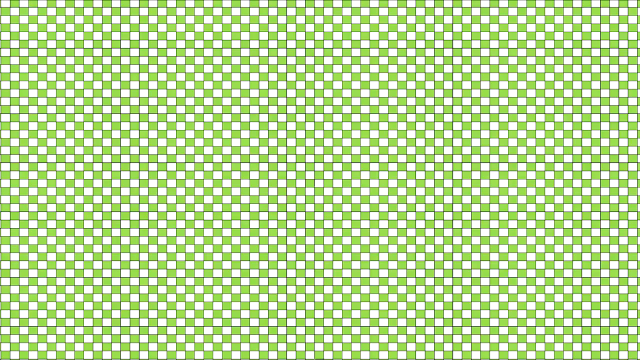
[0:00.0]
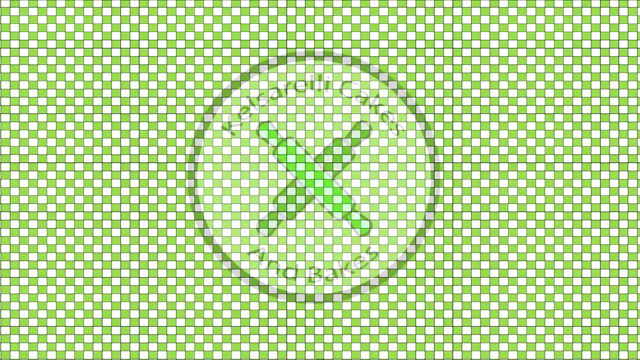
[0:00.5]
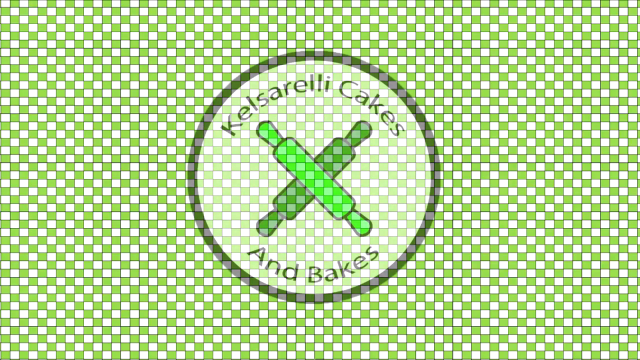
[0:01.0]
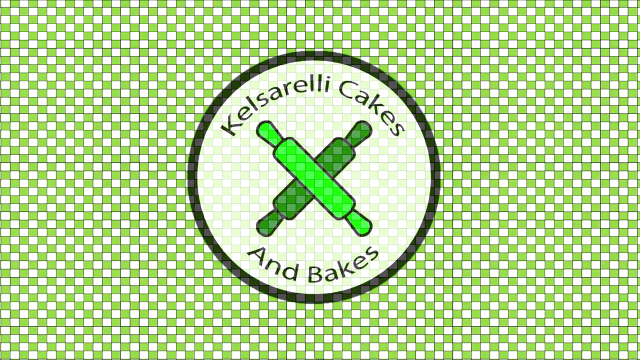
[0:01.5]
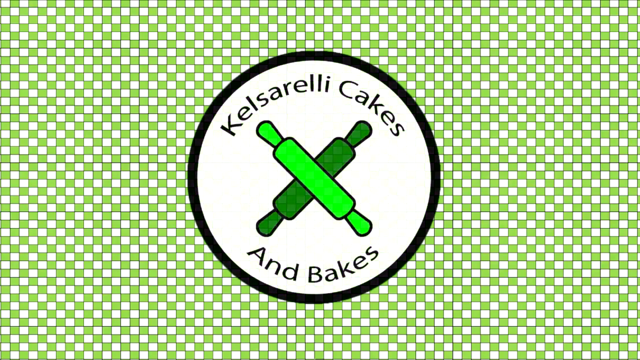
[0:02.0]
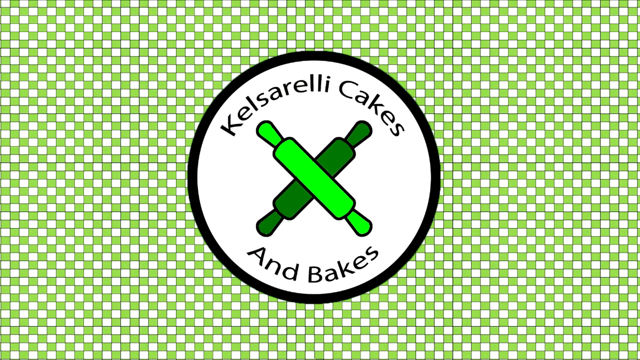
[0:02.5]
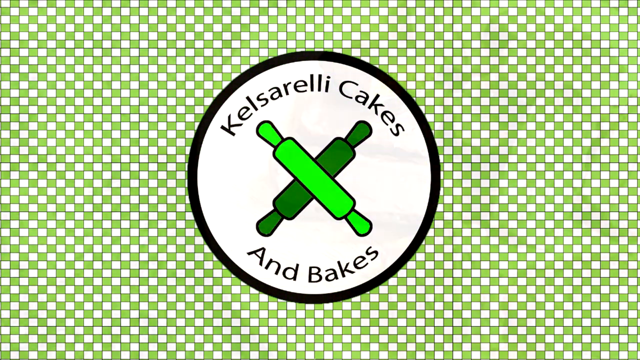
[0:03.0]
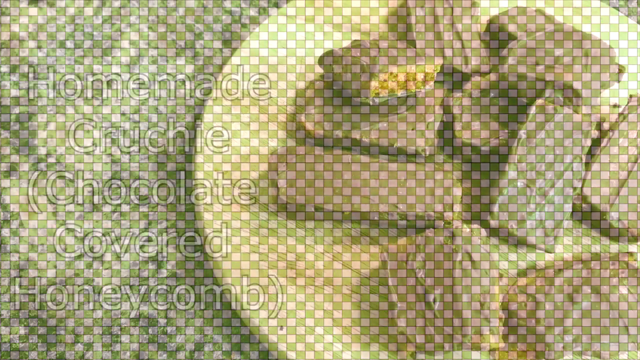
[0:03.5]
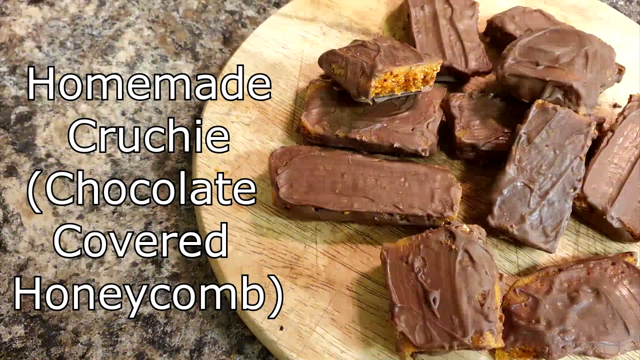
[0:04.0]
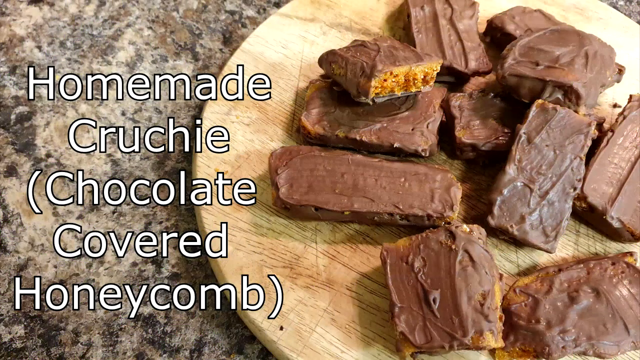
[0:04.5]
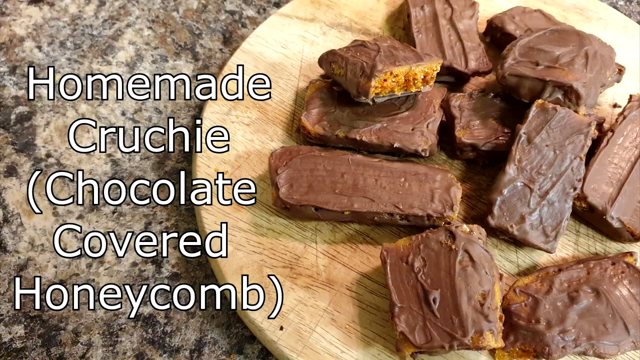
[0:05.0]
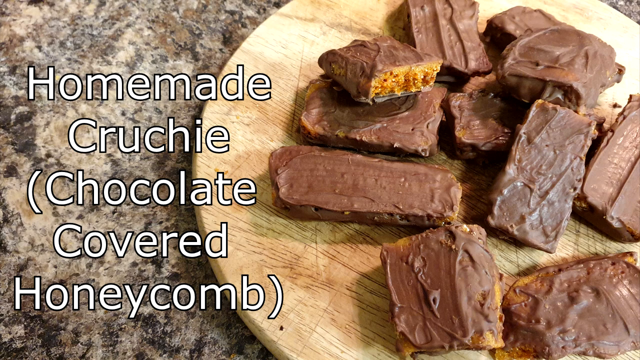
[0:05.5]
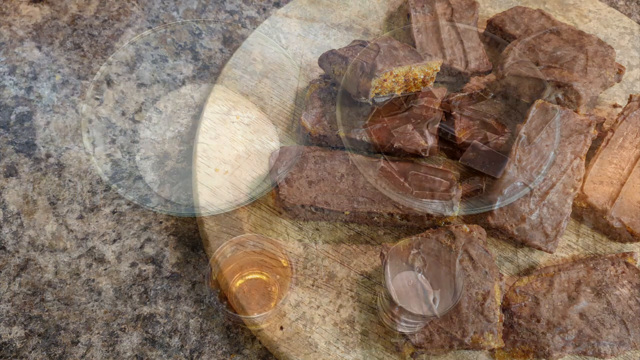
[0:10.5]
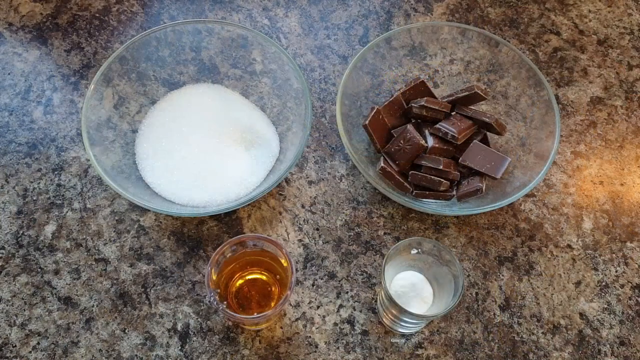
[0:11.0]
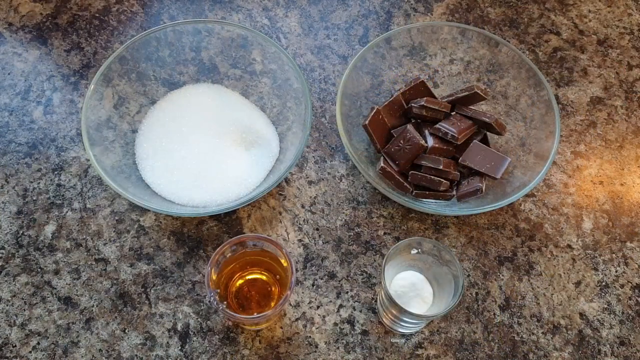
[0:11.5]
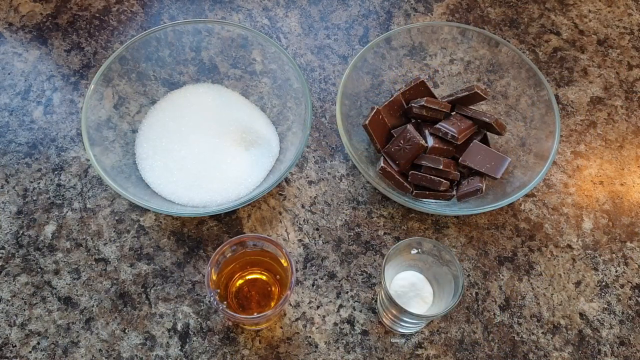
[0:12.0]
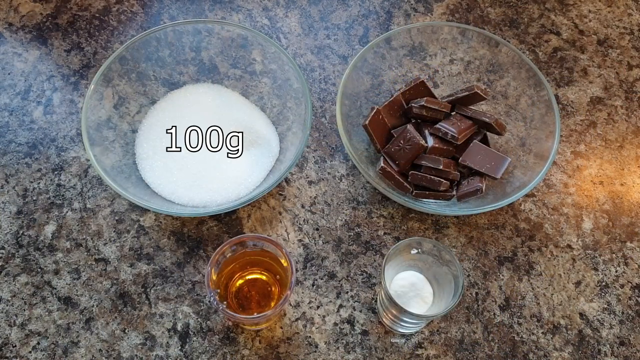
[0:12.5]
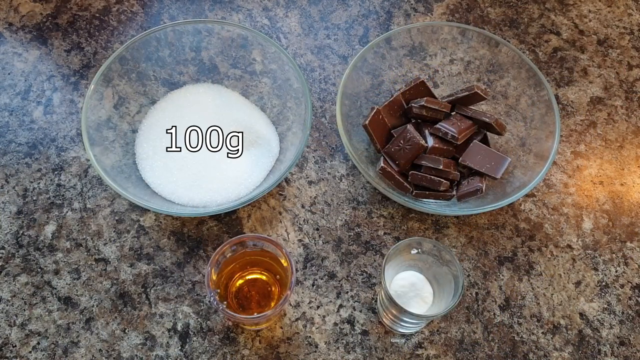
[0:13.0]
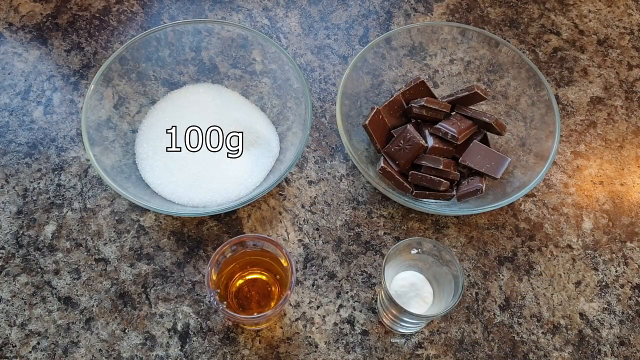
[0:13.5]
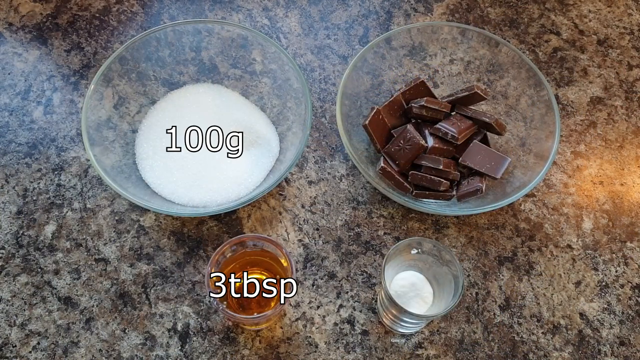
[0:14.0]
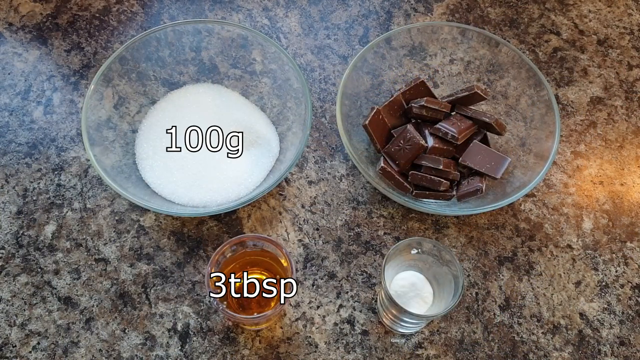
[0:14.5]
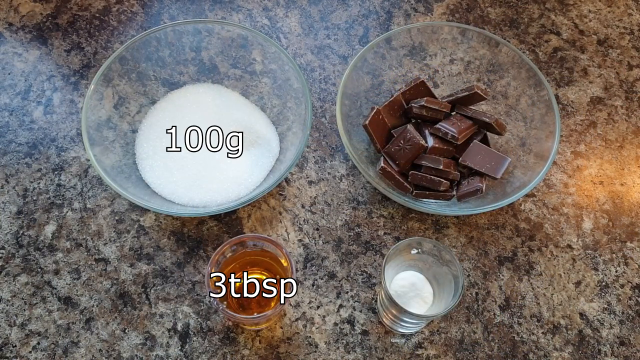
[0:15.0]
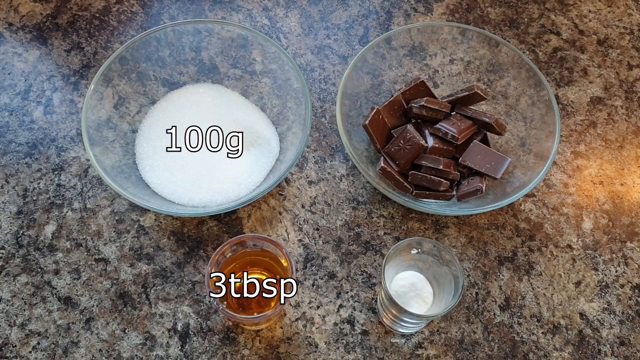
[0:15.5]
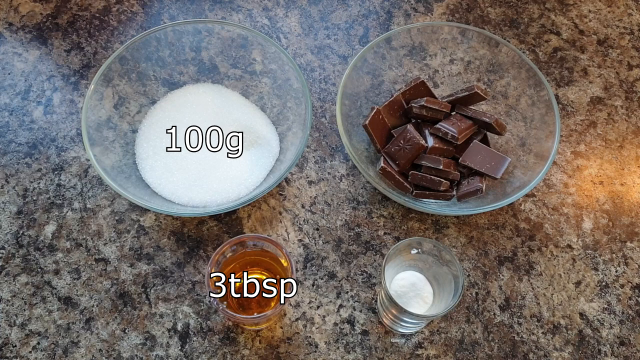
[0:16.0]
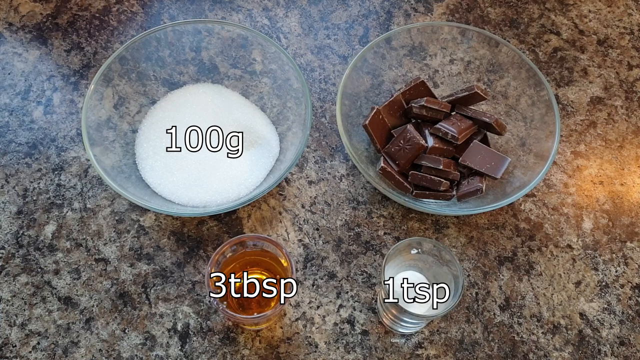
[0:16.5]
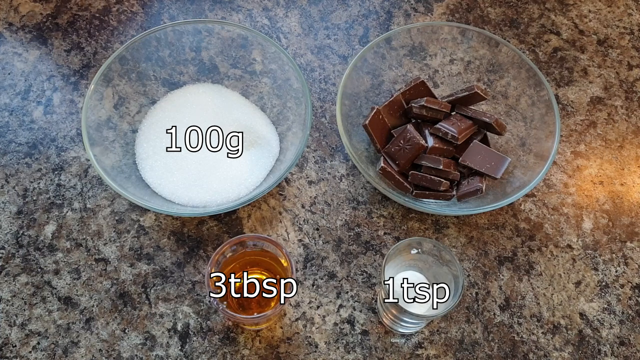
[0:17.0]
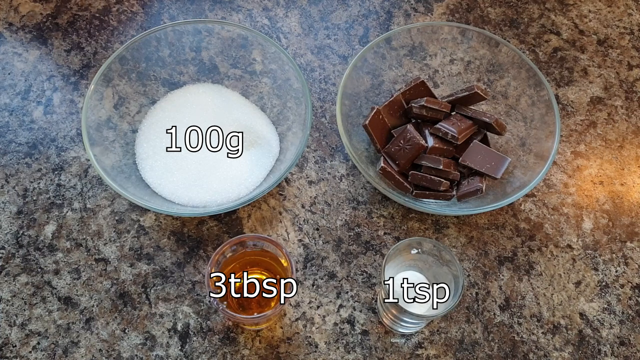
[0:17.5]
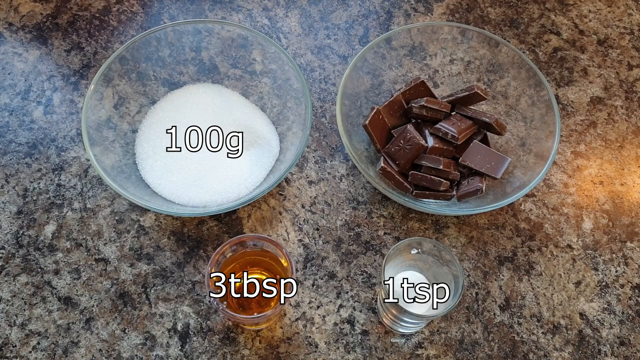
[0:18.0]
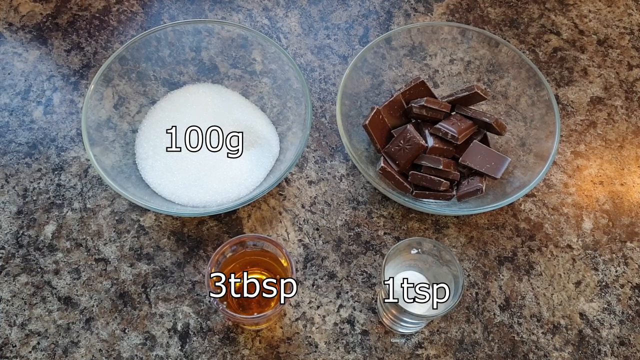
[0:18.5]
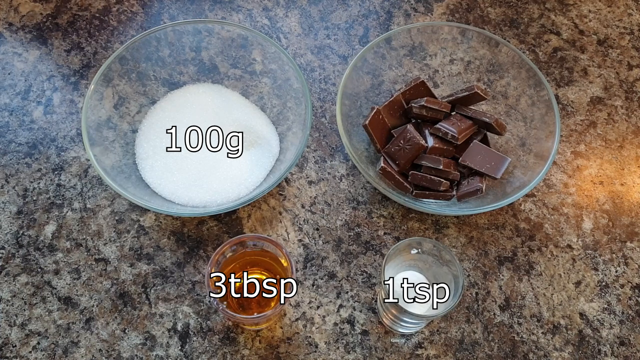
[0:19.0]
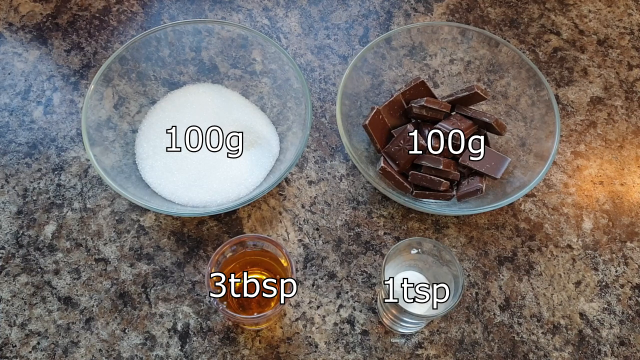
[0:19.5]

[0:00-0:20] The video opens on a checkered background of light green and white squares. On top of it is a round logo with a black outline and a white background that reads "Calcirelli Cakes and Bakes." In the center of the logo are two green rolling pins crossed in an X shape, one lime green and the other dark green. The scene transitions to an image of a baked good on a round wooden cutting board, with text on the screen reading "Homemade Cruchie (Chocolate Covered Honeycomb)". To the right of the text is the baked good, which looks like a crunchy, chocolate-covered treat. Next comes an image of four separate bowls, each containing a different ingredient. One of the larger bowls has the text "100G" on top of it and looks like it possibly contains sugar. To its right, a bowl labeled "100G" appears to hold small pieces of chocolate. Below that, a small bowl labeled "3 tablespoons" seems to contain something like honey, possibly. To the right of that, another small bowl labeled "one teaspoon" possibly contains salt or maybe baking powder.